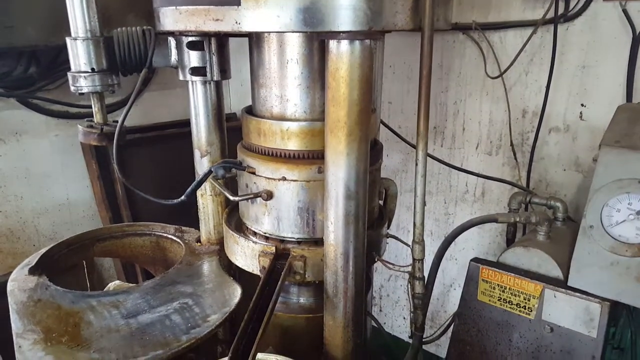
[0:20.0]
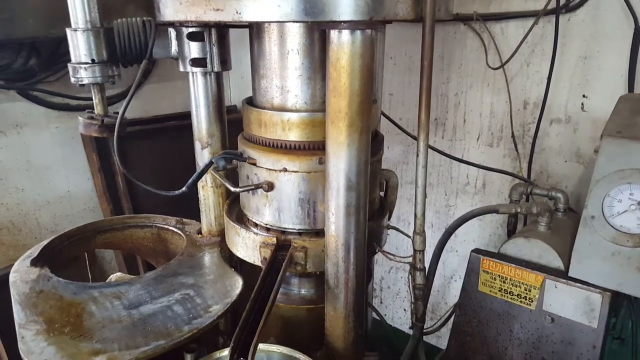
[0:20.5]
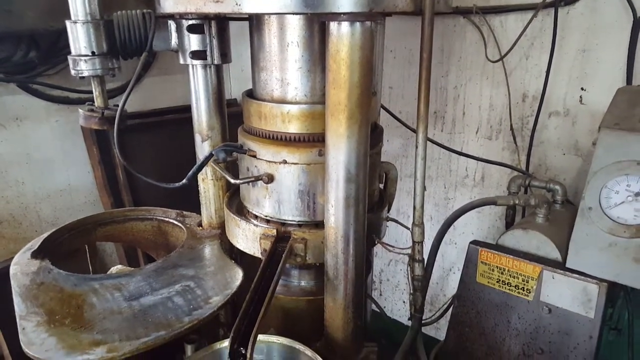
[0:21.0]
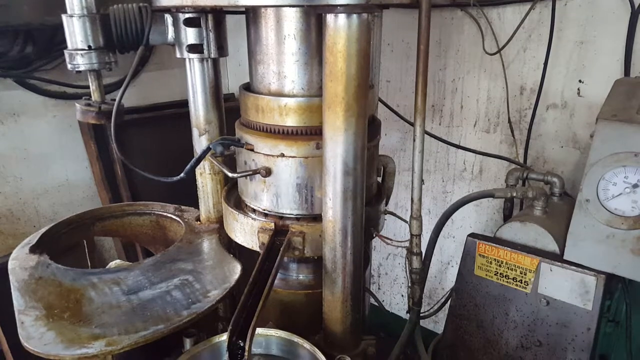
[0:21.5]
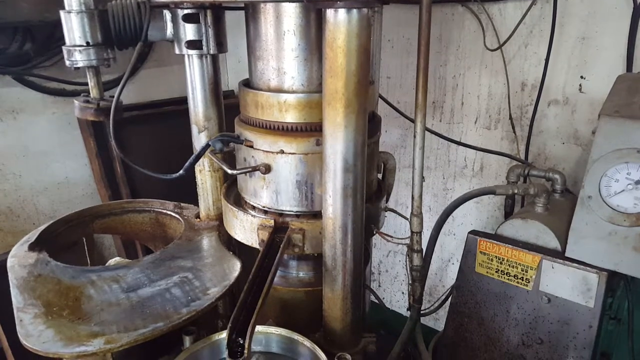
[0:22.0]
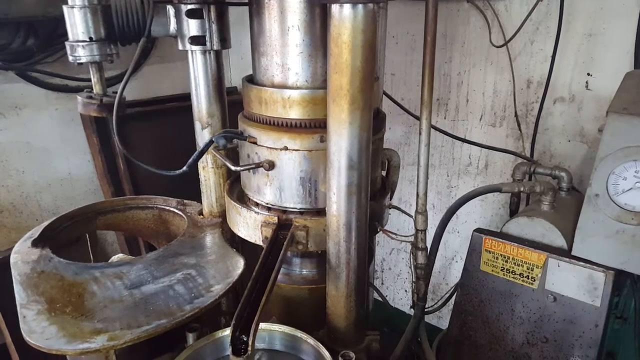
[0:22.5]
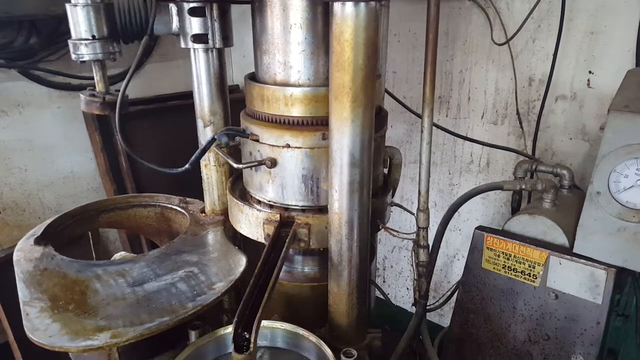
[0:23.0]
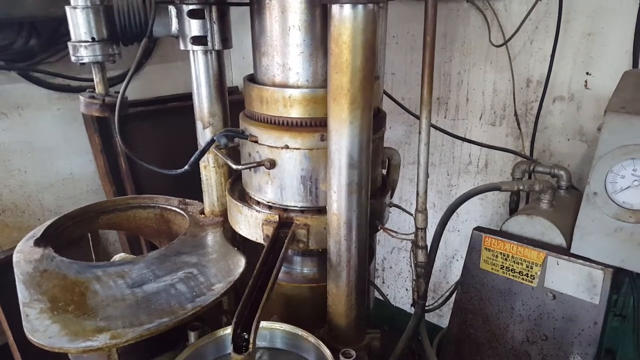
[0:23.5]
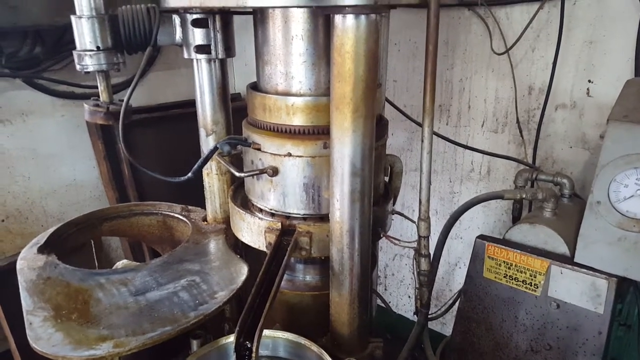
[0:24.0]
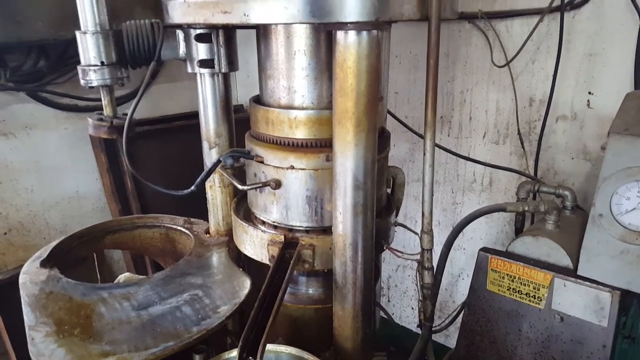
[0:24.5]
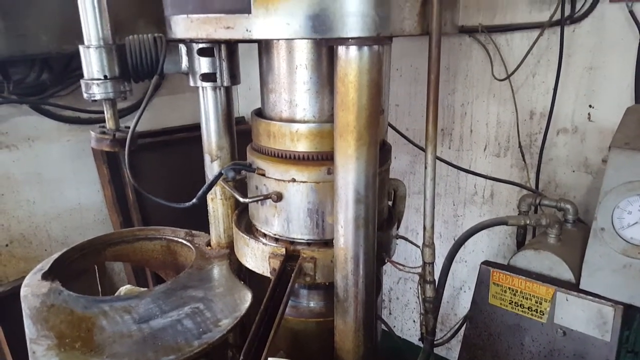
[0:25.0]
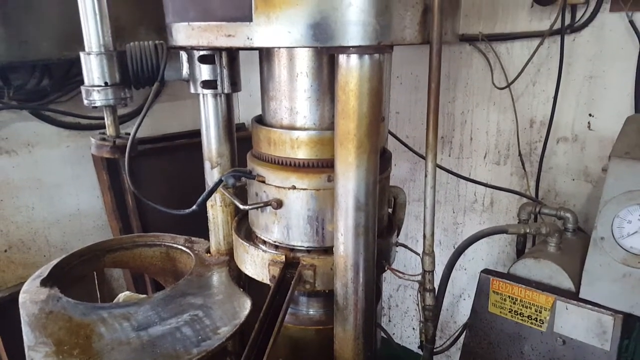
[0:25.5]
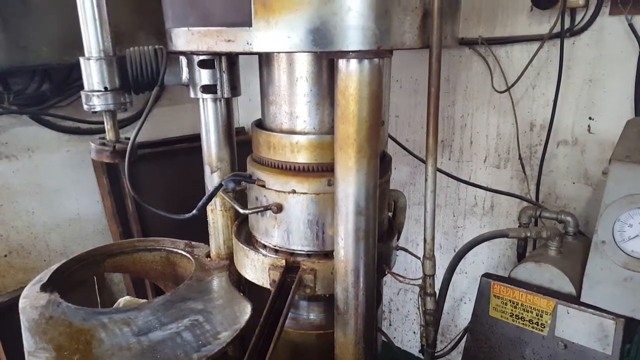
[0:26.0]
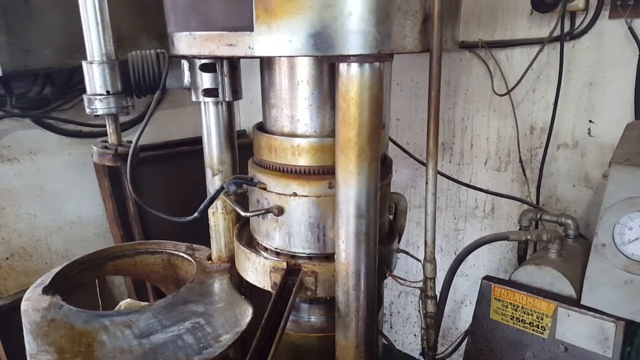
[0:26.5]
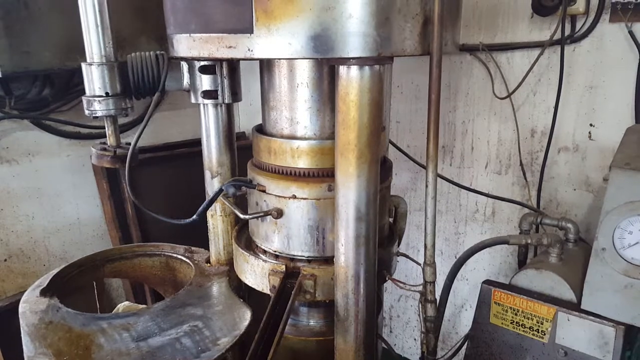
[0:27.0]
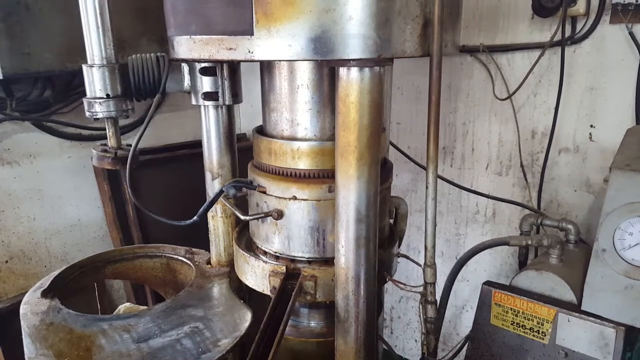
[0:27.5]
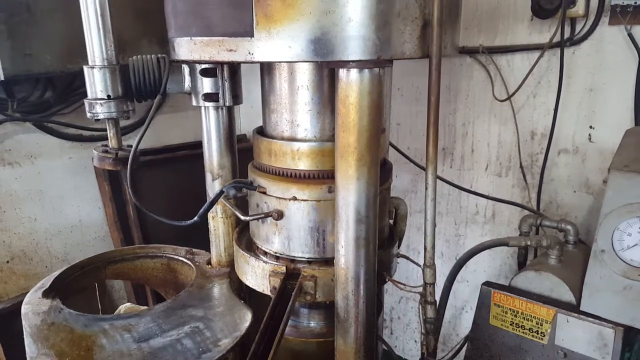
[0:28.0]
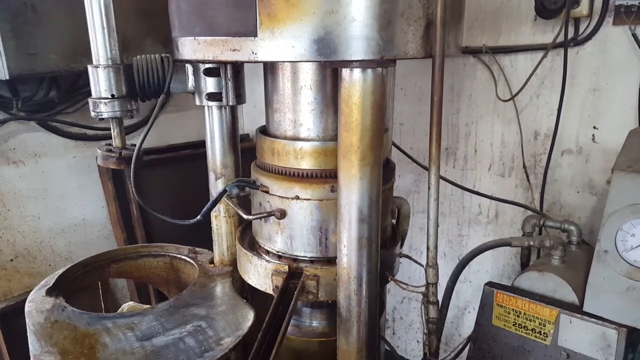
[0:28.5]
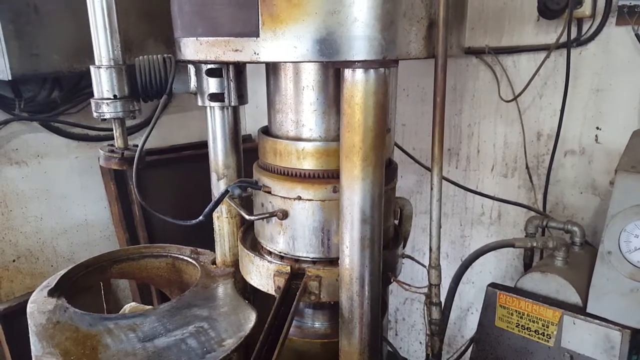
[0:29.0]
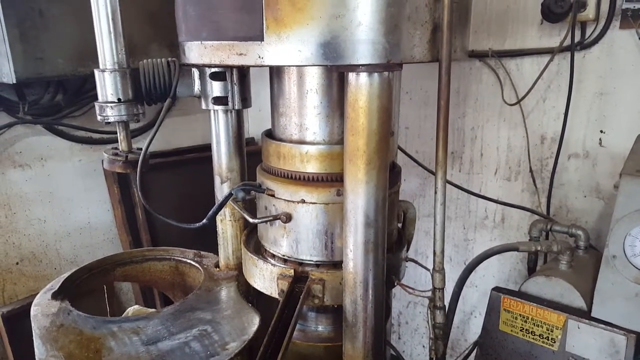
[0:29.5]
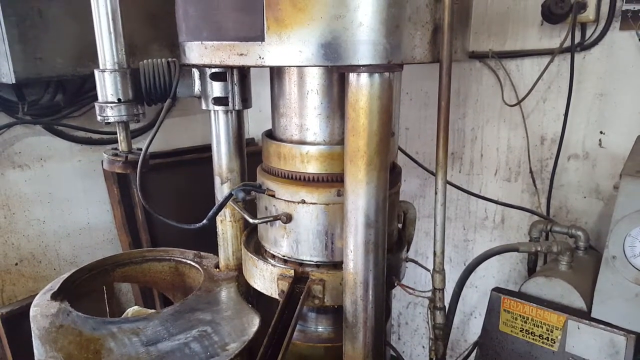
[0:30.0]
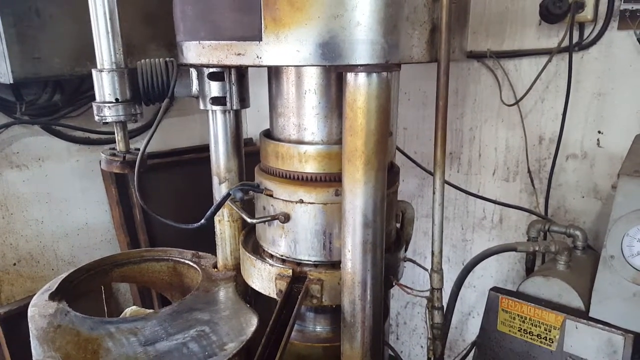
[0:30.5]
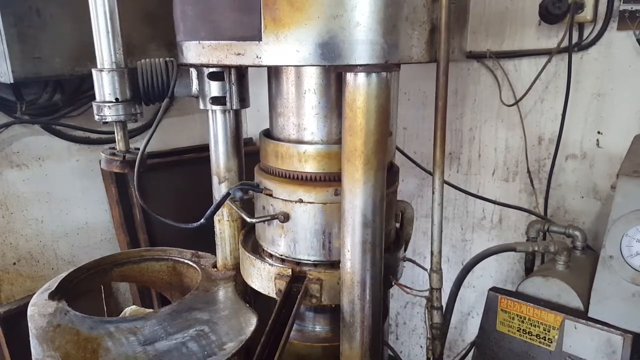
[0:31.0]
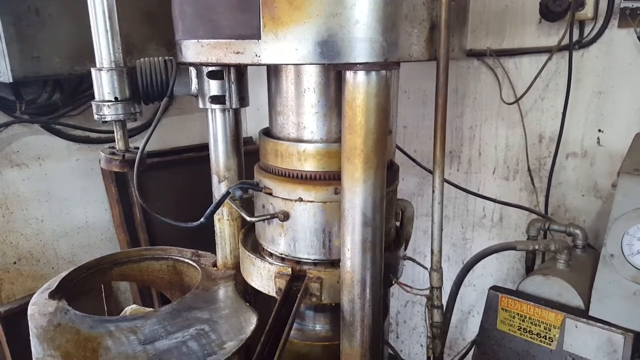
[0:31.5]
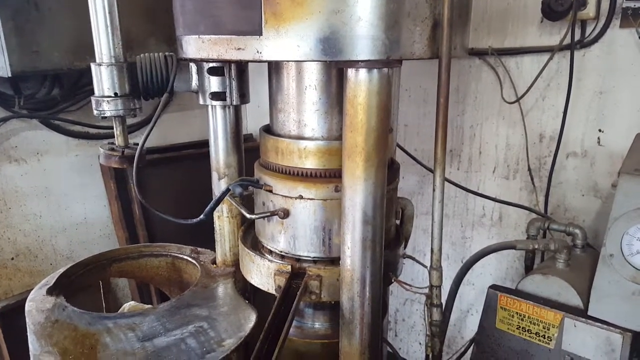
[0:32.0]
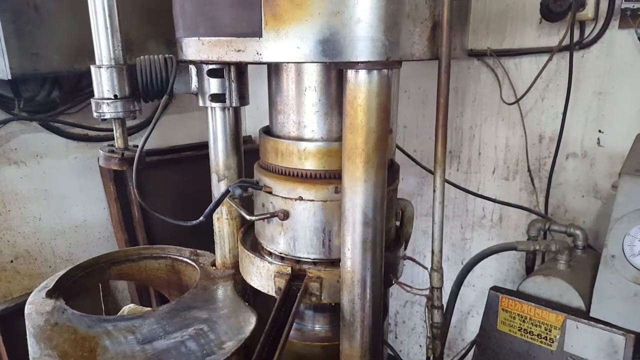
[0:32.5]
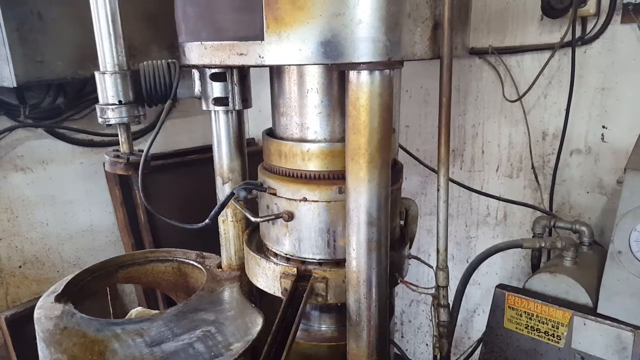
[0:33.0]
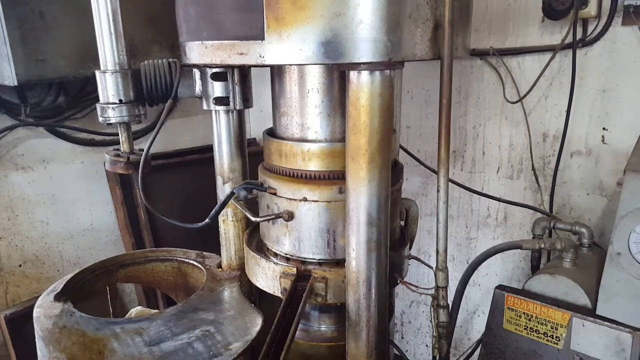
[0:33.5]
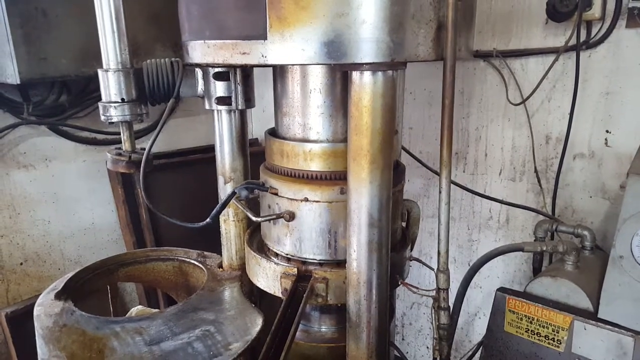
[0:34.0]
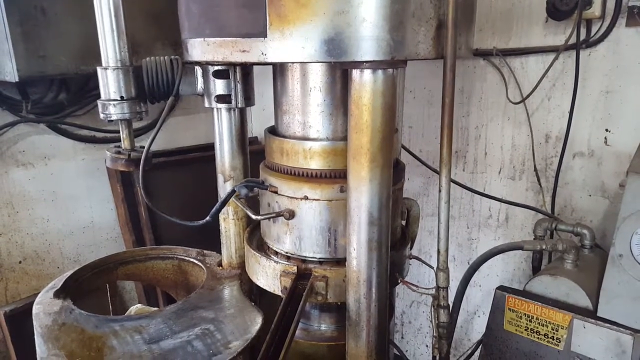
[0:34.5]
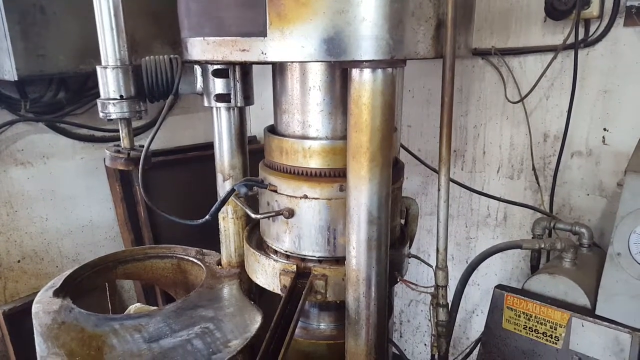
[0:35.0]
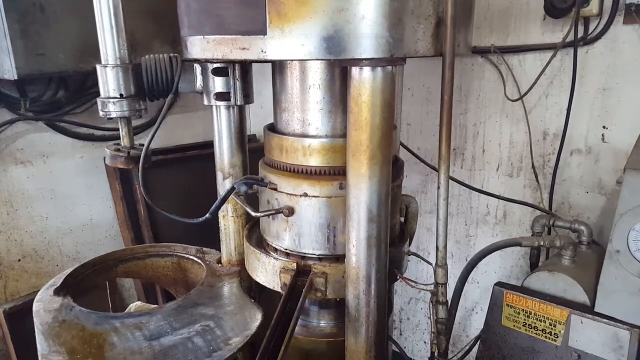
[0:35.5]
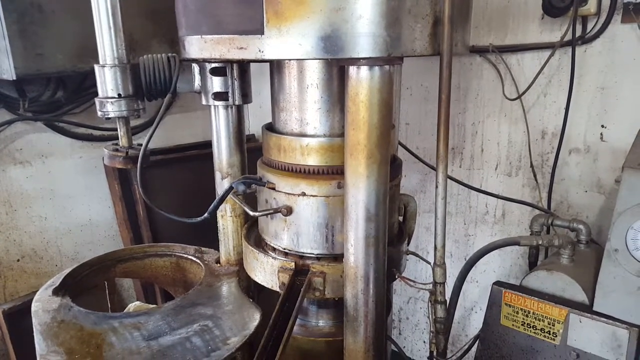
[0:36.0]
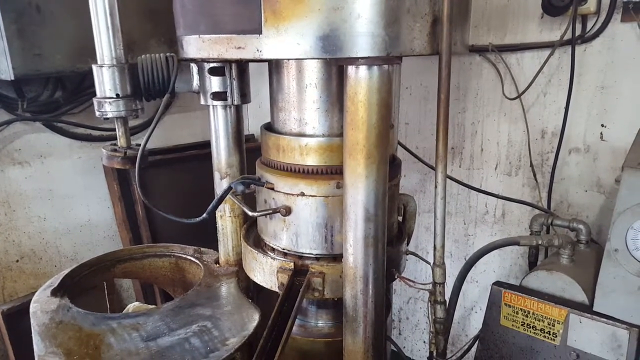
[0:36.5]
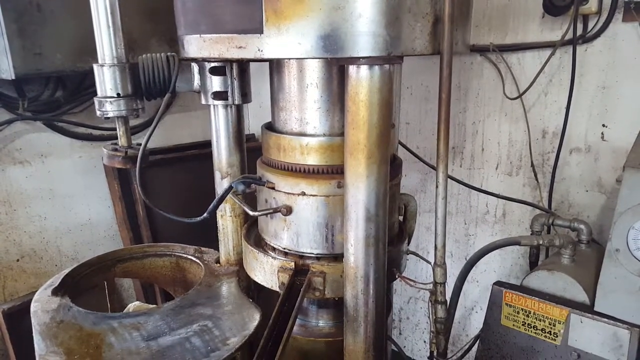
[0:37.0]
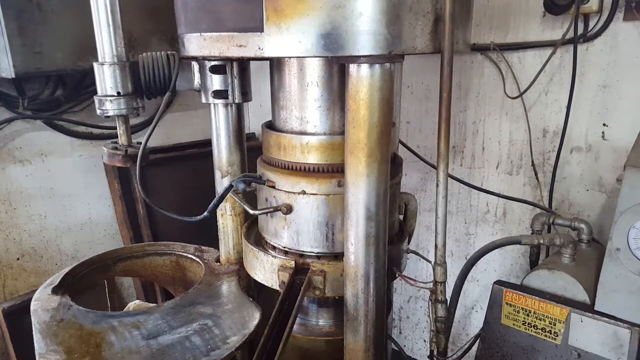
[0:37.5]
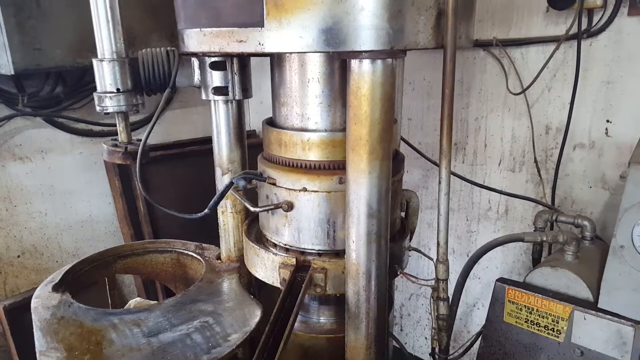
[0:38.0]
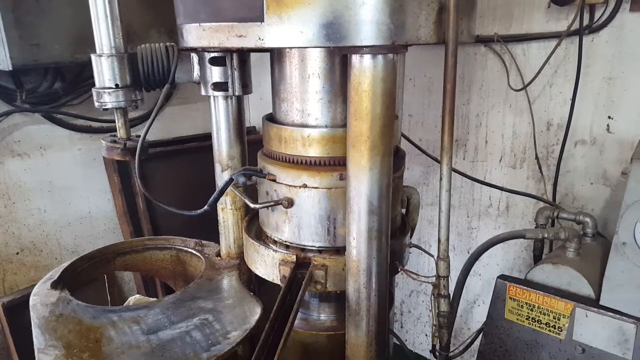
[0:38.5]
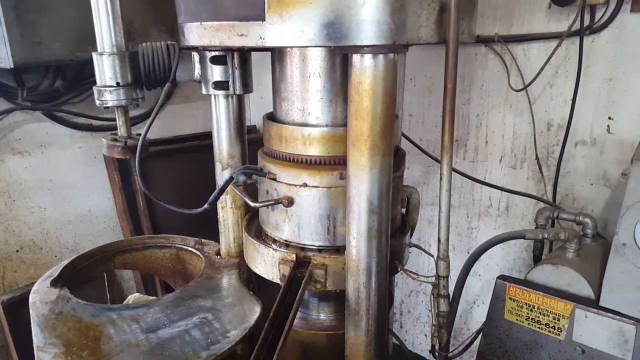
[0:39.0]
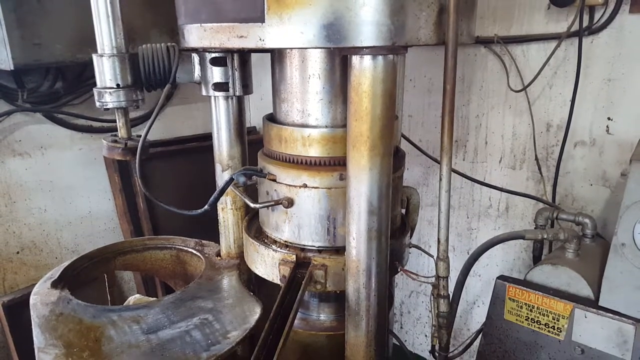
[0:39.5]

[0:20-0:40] The close-up view of the piston continues. Two rods are connected to the front of the piston; one appears to connect through the receptacle on the left side, and the one in front goes all the way down off-frame. For a few moments nothing much else happens. The wire going off to the left side of the piston wraps around a horizontal bar connected to the left of the rod, and this horizontal rod connects to another vertical rod that goes upward and off-screen. Another, perhaps smaller, piston comes out of this rod and points down towards the receptacle below, but it does not appear to be moving. A large base above the piston connects to the rods as well. The camera continues to show the piston for a few moments and bobs slightly to the left and right.